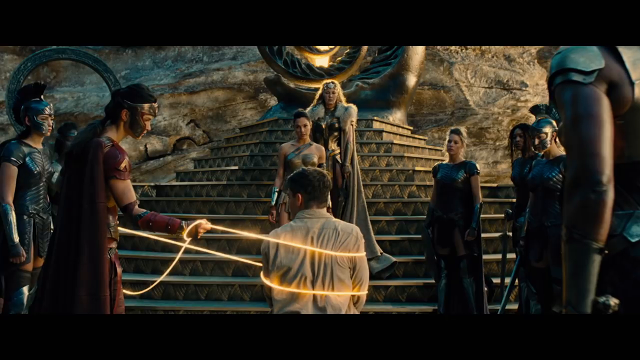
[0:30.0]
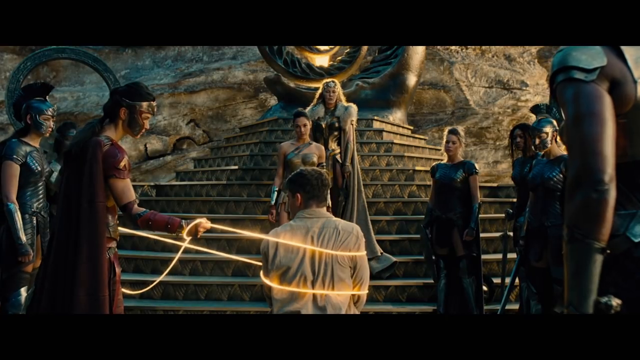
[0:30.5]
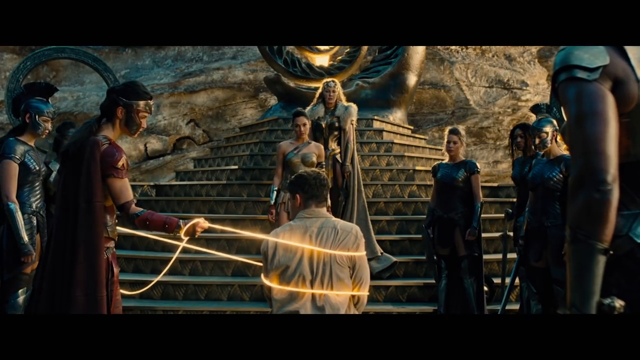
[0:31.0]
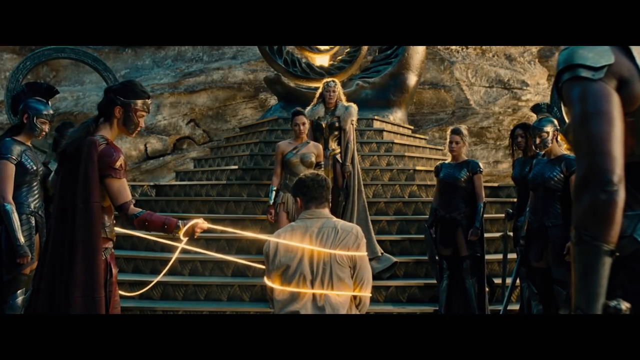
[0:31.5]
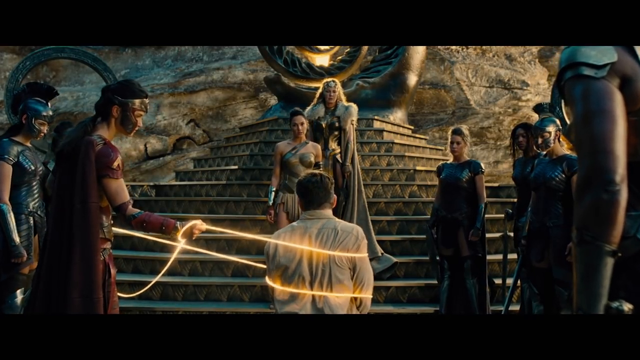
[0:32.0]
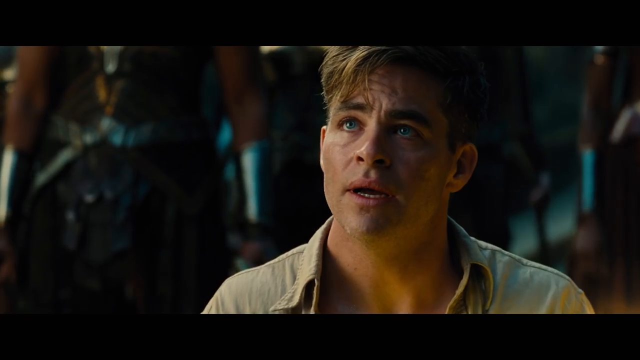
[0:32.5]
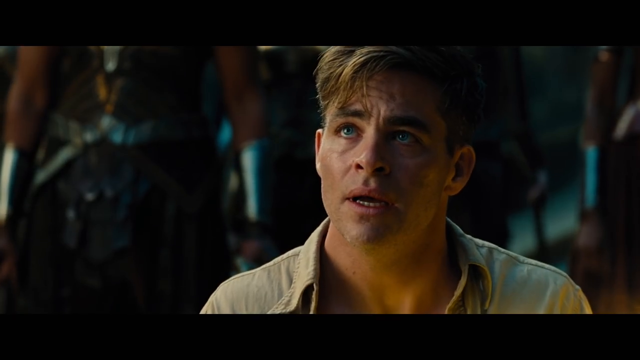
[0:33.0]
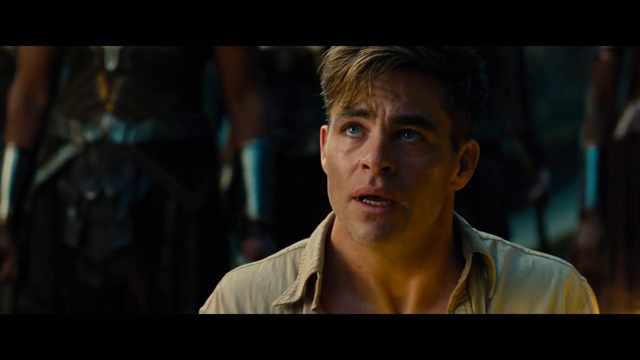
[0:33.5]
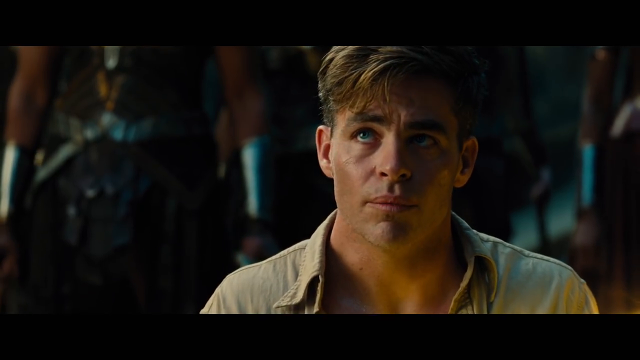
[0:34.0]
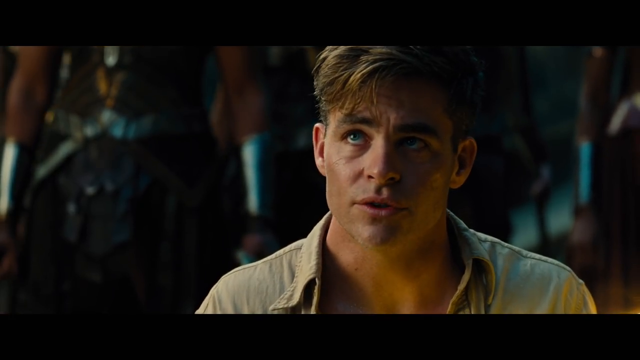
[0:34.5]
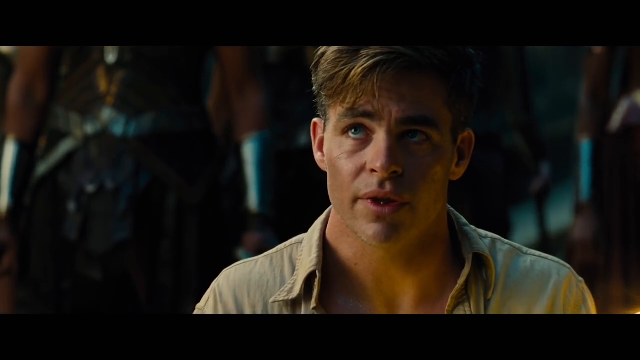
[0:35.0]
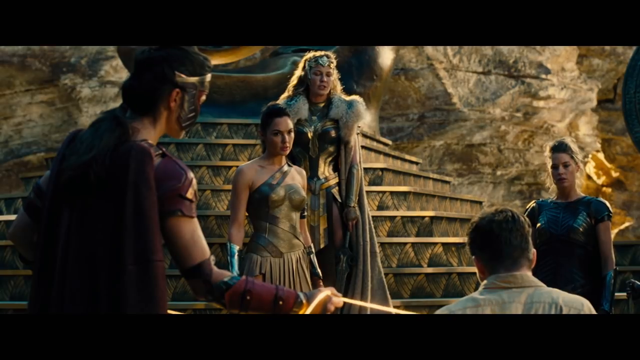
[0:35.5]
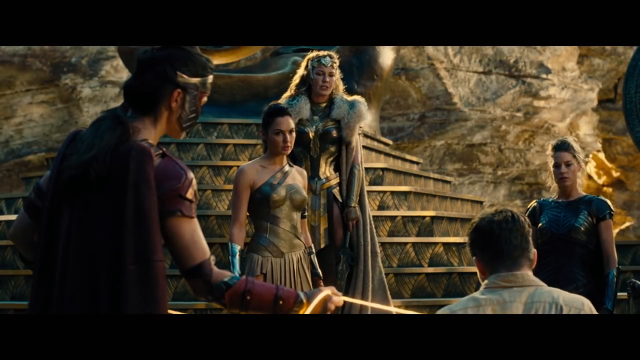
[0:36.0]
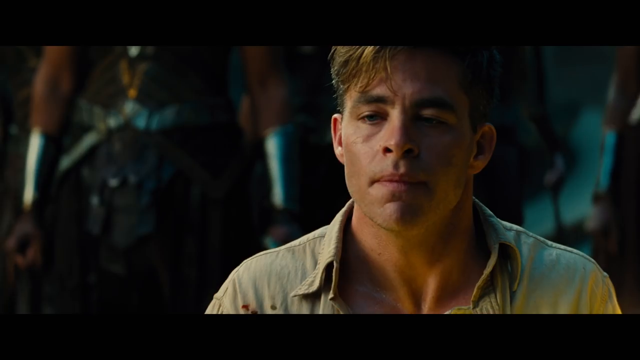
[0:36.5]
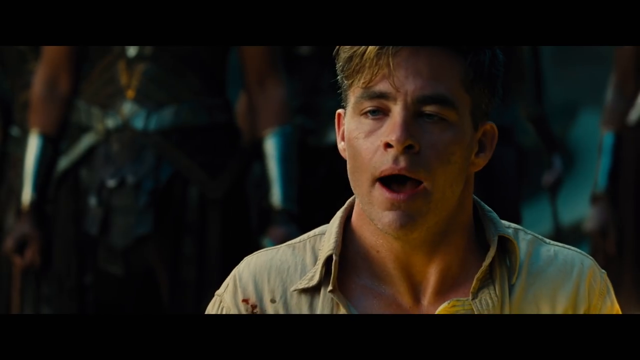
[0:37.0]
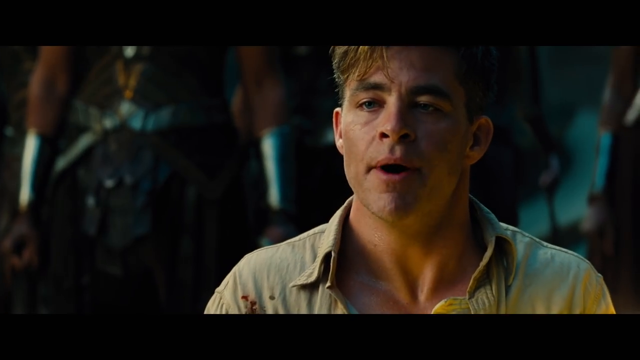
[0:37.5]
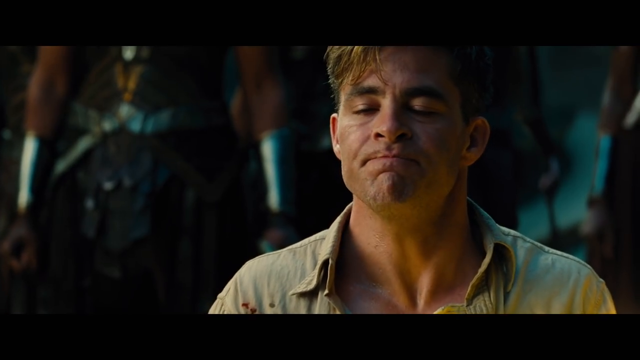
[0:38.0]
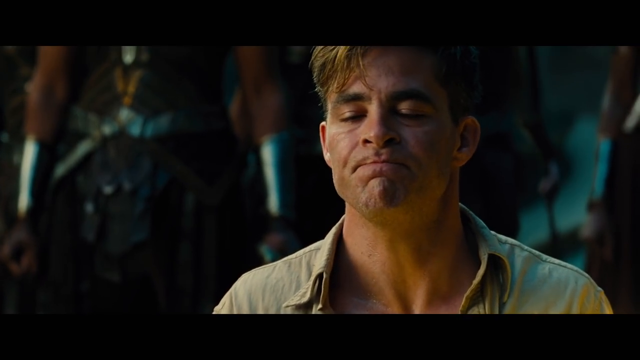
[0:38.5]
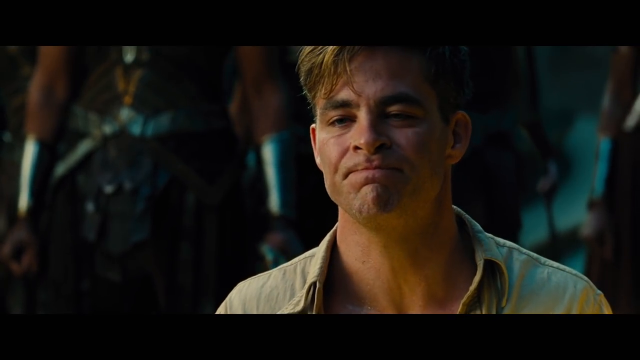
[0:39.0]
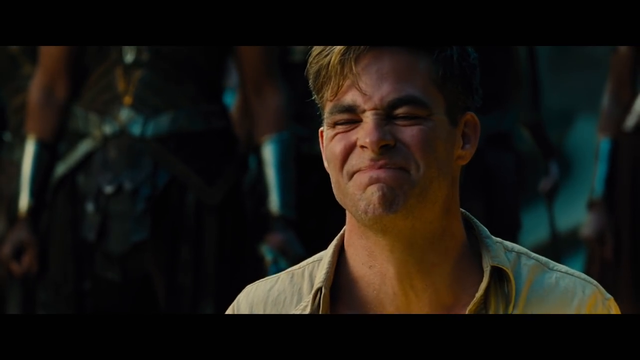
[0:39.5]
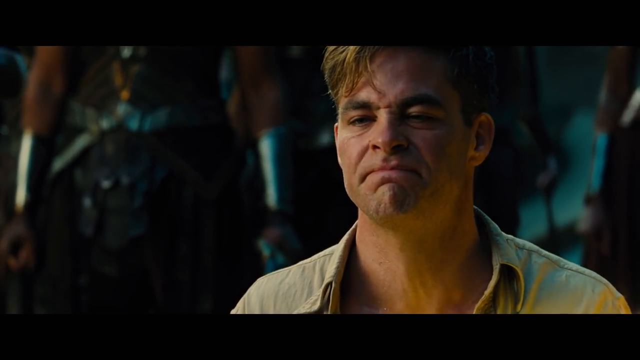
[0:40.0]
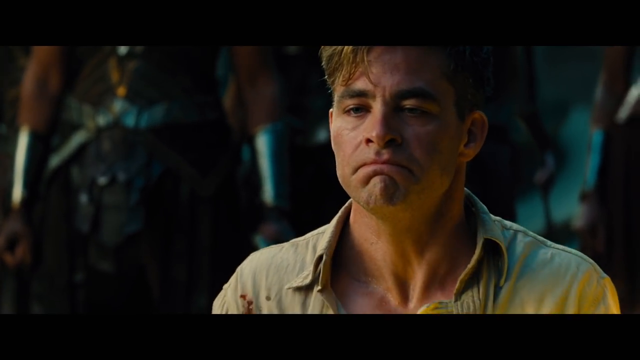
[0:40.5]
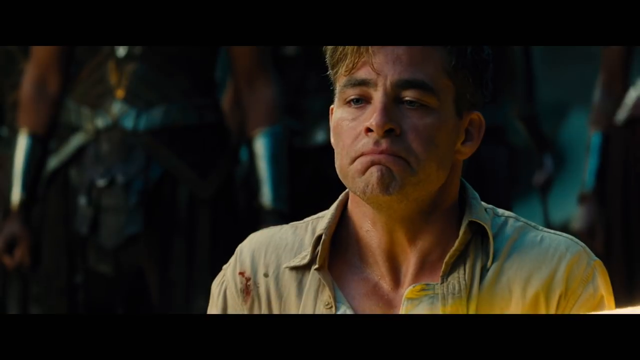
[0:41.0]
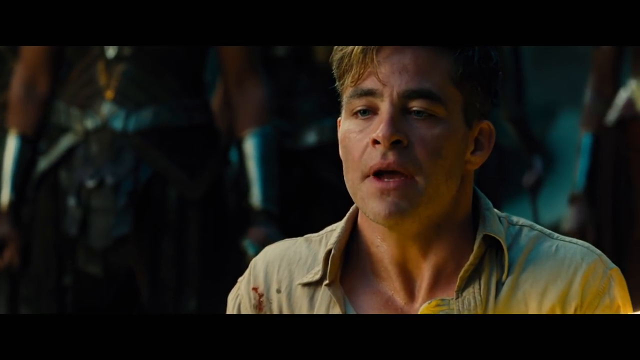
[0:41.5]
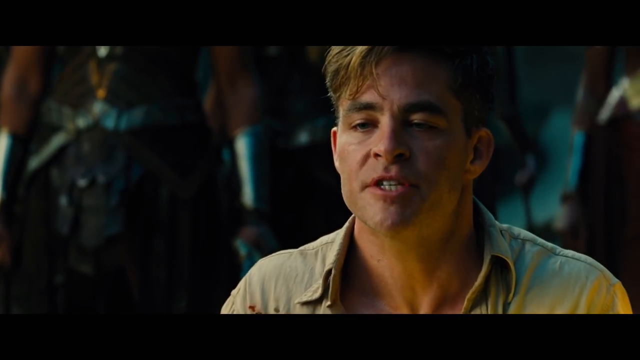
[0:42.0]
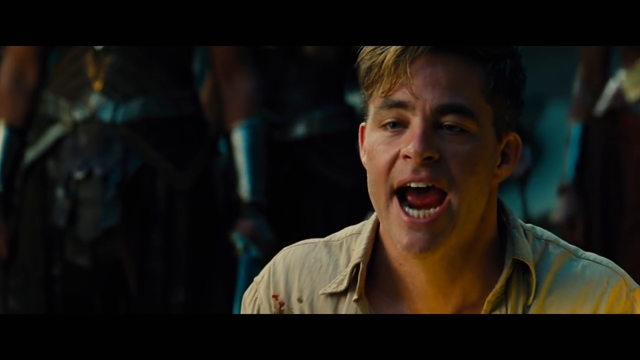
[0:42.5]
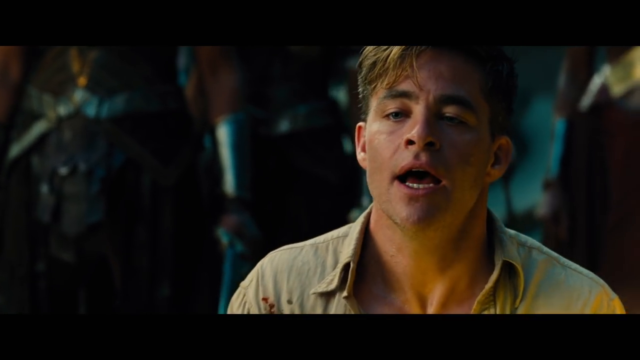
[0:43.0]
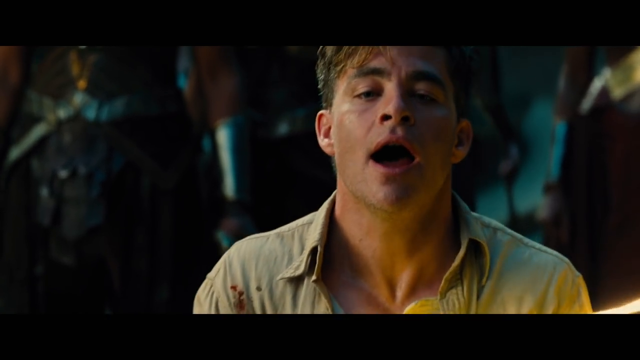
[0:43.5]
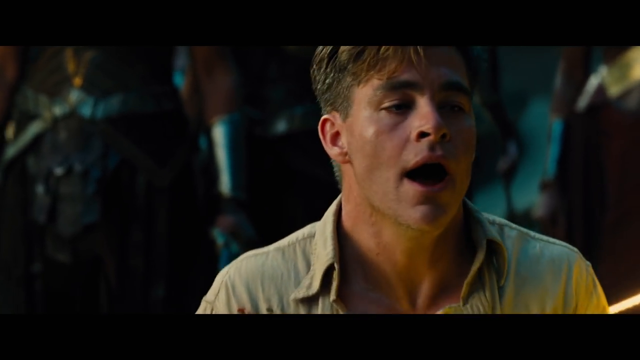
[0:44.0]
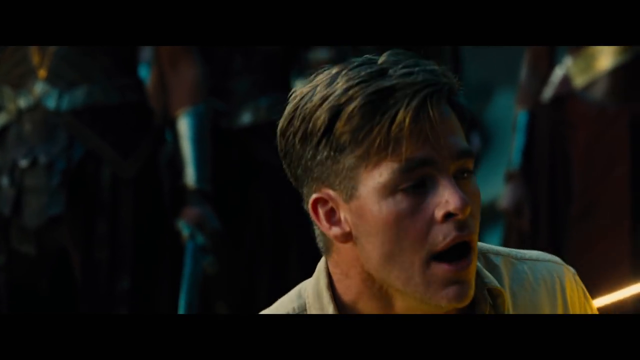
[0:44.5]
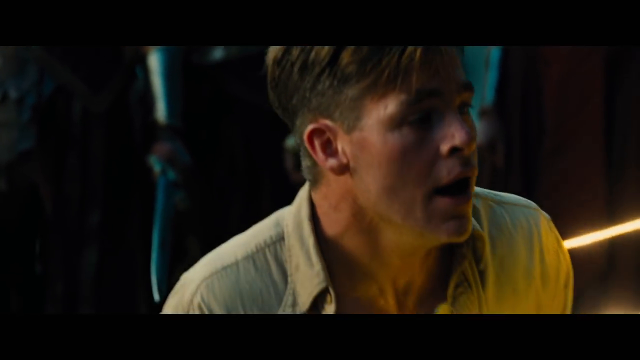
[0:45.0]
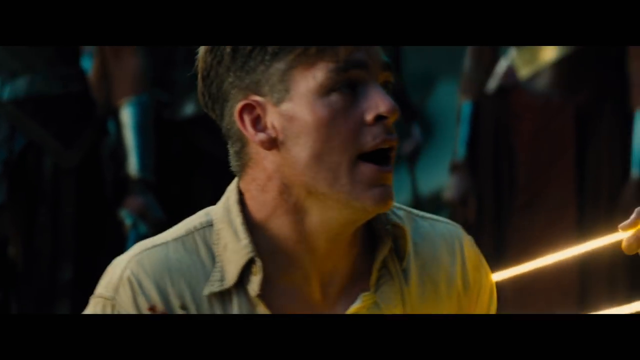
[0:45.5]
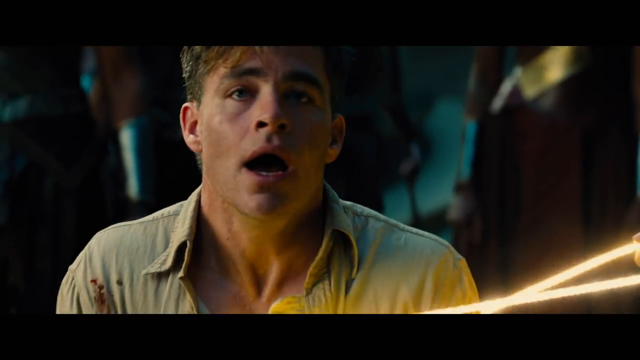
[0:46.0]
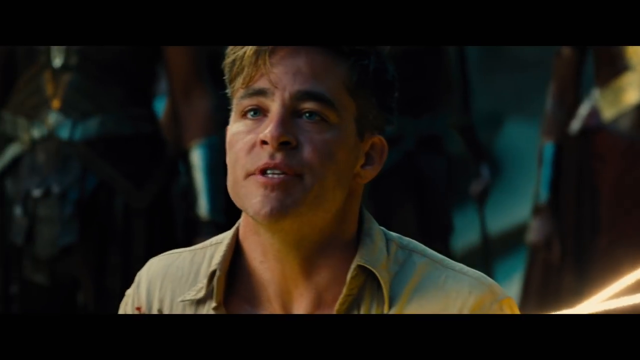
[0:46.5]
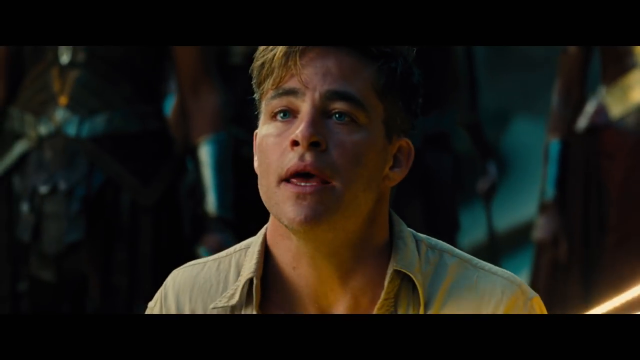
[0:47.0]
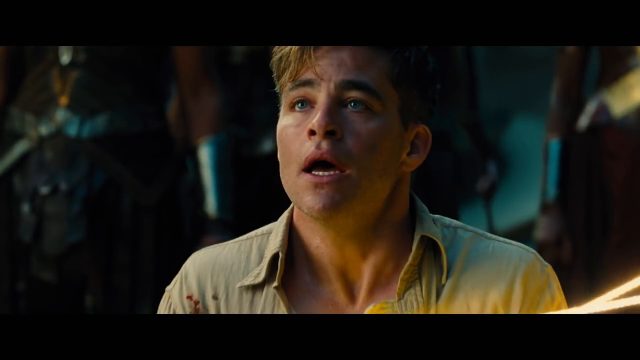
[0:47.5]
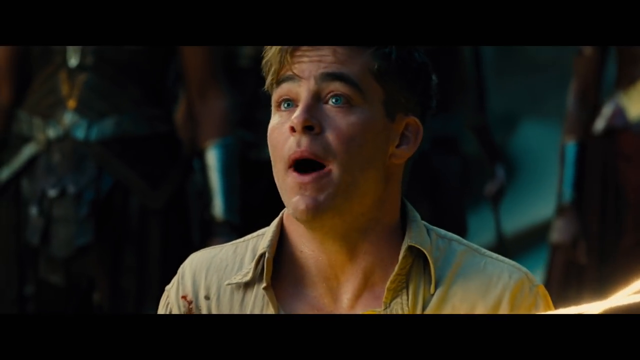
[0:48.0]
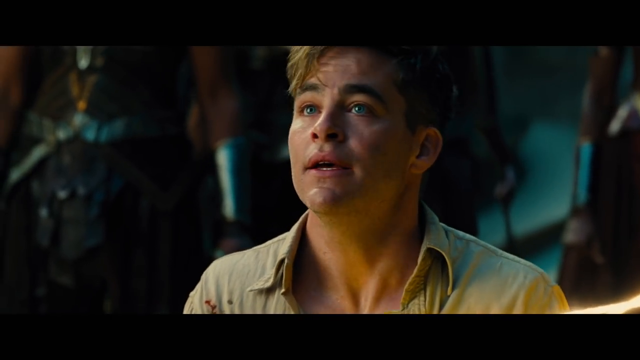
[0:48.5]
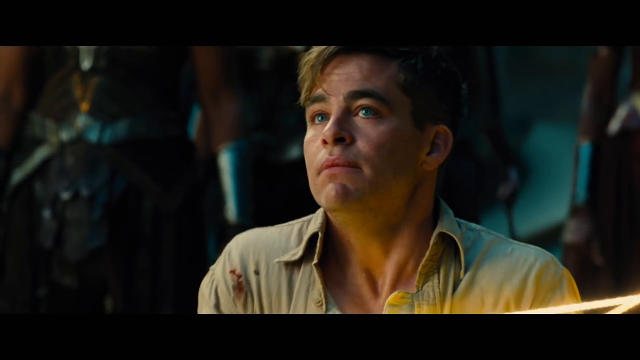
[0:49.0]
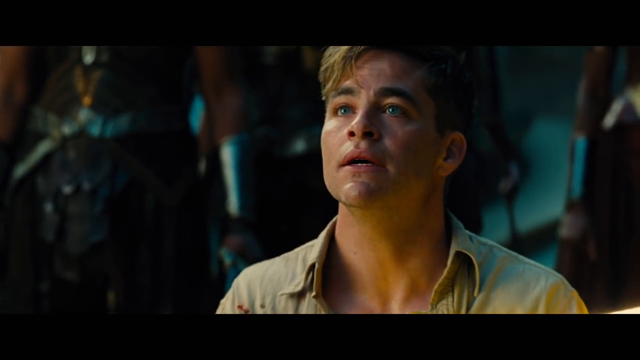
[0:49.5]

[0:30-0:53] A man sits on the ground, held captive by a glowing rope, while two women dressed in a certain attire stand in front of him. The camera pans back to the man, who looks hopeless. He seems to be trying to get the help of the woman in front of him, and then seems to be trying to explain himself to the two women. He then seems to be in some sort of discomfort and turns around nervously. Toward the close, he turns back around and resumes talking to the two women standing before him. He seems to be trying to make sense of what is happening and has a look of confusion on his face. The video then cuts to a black screen.